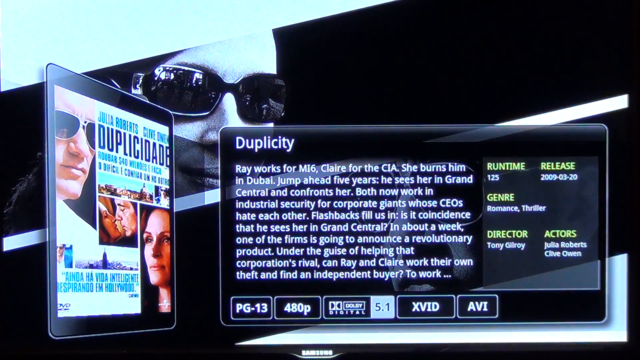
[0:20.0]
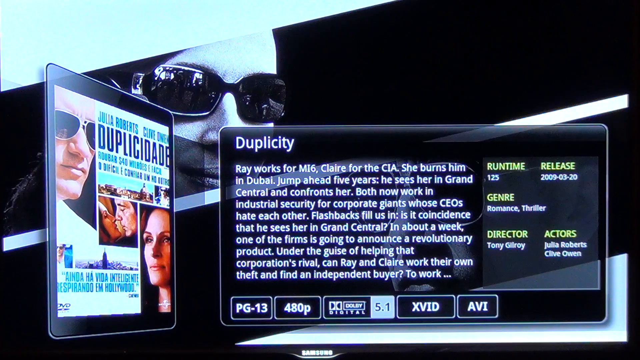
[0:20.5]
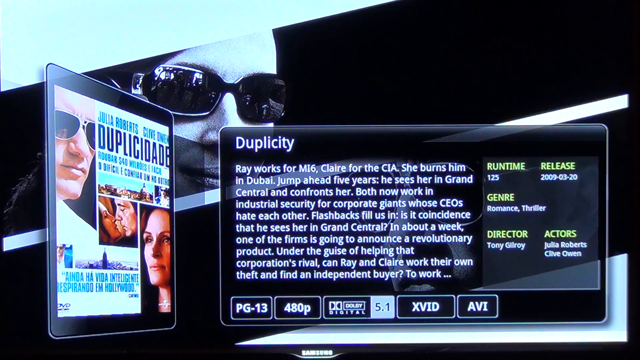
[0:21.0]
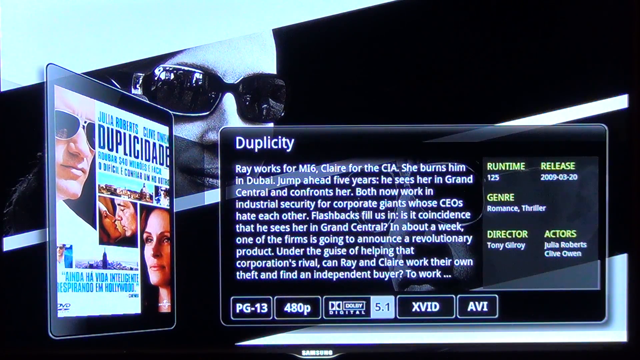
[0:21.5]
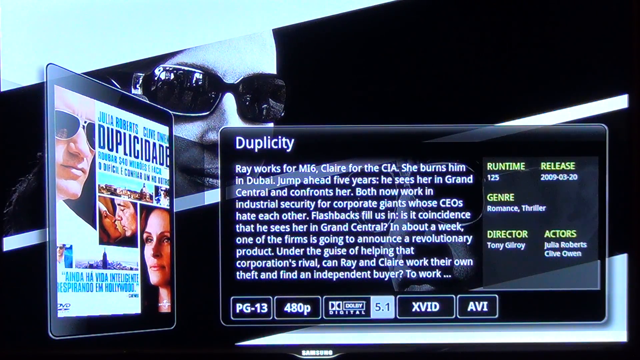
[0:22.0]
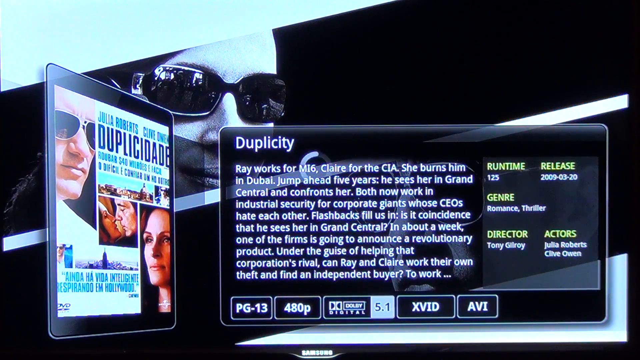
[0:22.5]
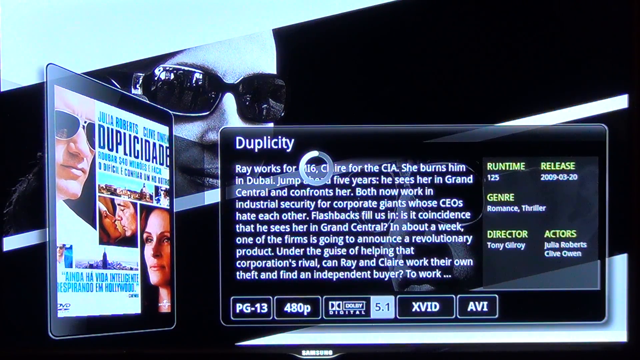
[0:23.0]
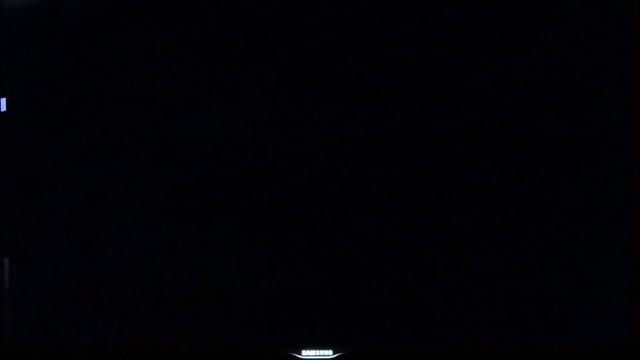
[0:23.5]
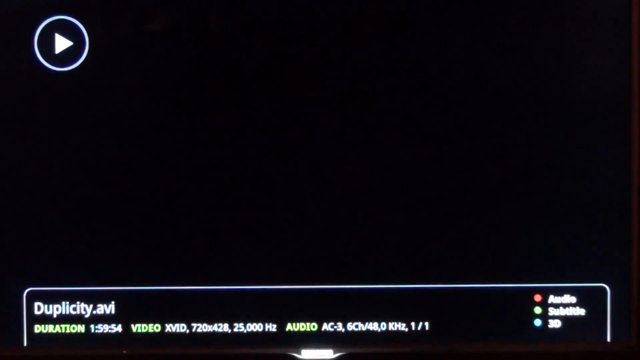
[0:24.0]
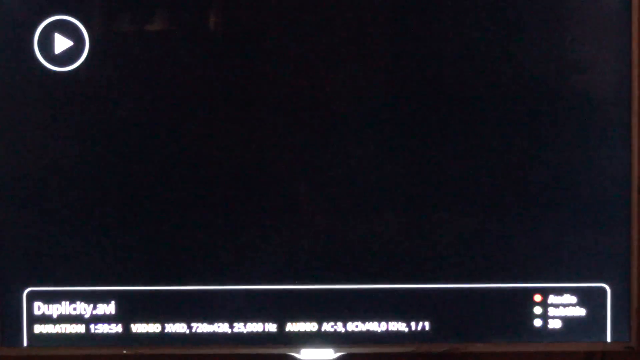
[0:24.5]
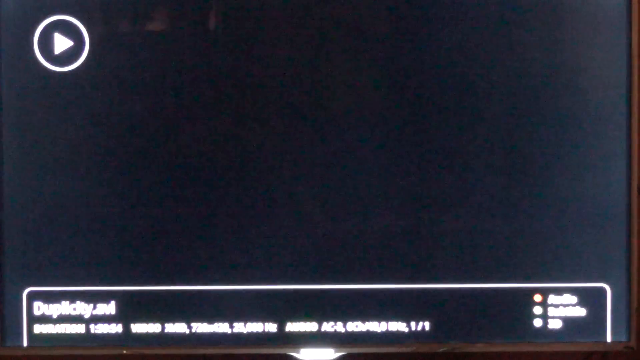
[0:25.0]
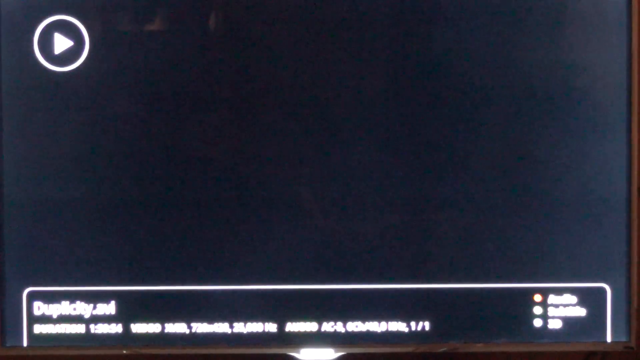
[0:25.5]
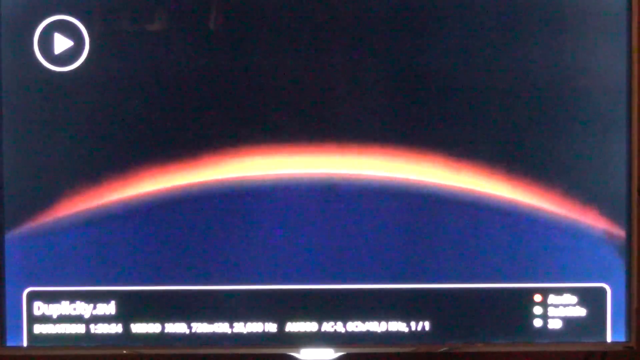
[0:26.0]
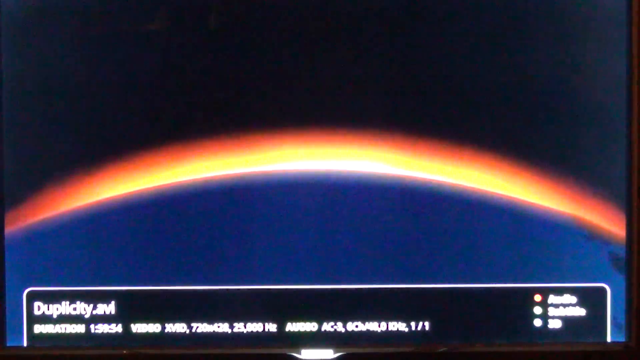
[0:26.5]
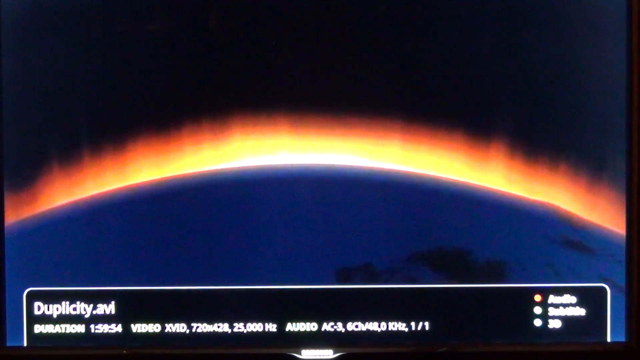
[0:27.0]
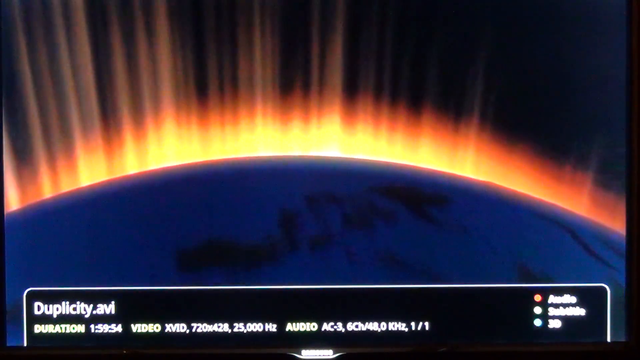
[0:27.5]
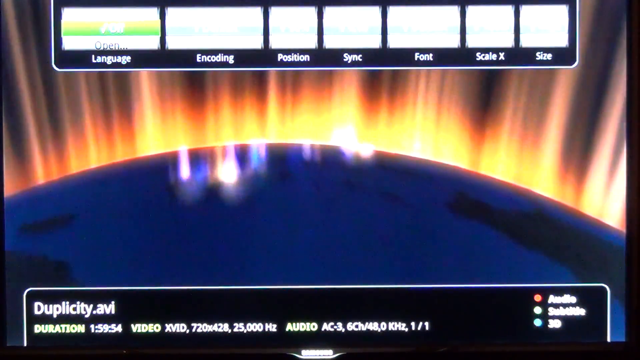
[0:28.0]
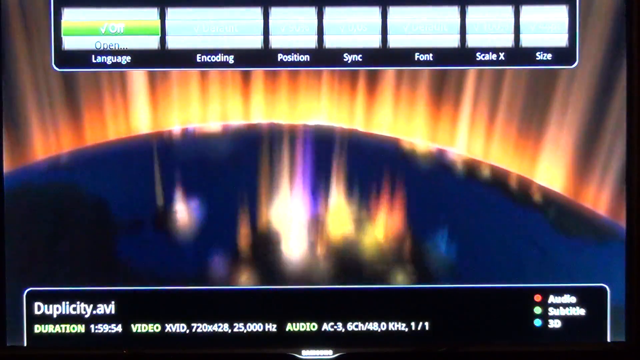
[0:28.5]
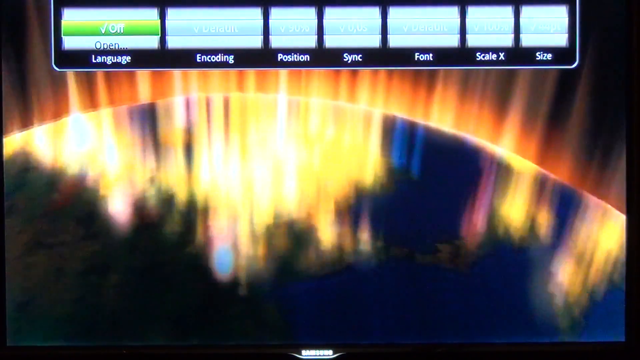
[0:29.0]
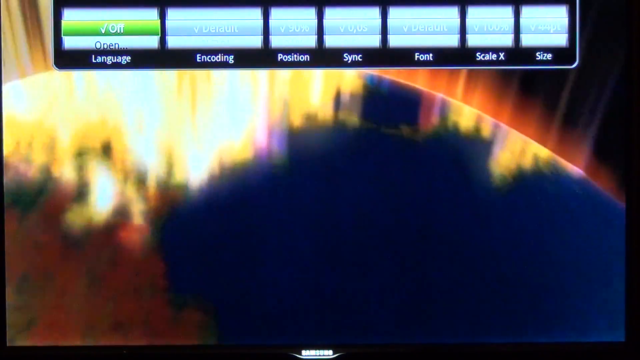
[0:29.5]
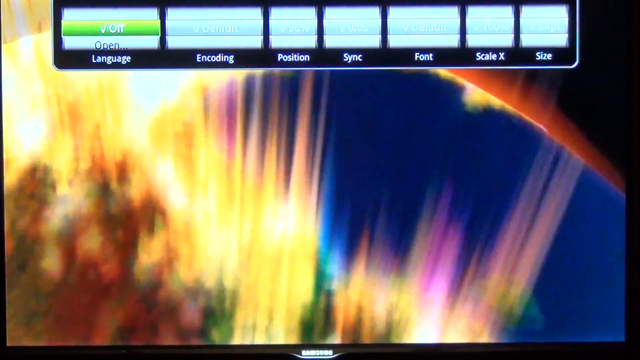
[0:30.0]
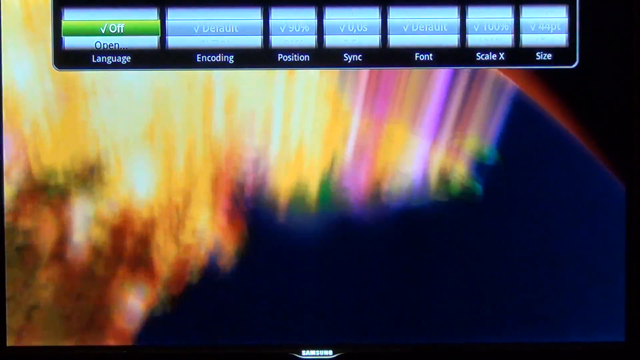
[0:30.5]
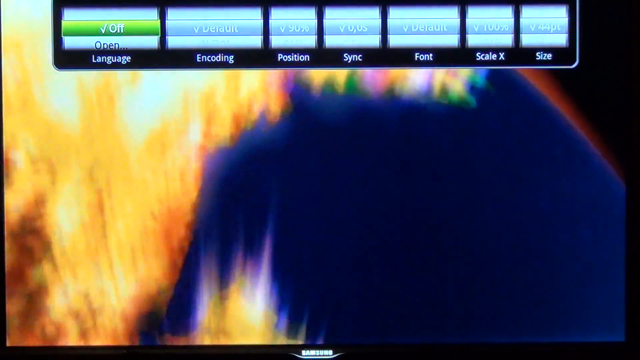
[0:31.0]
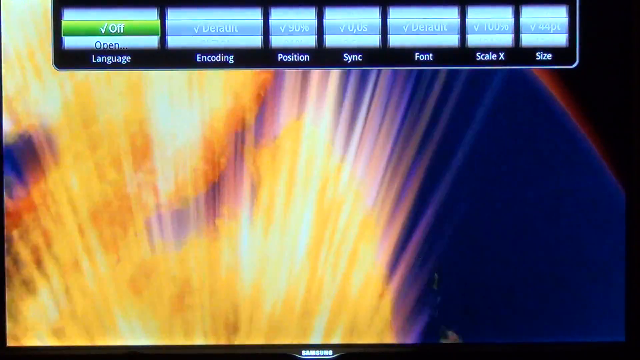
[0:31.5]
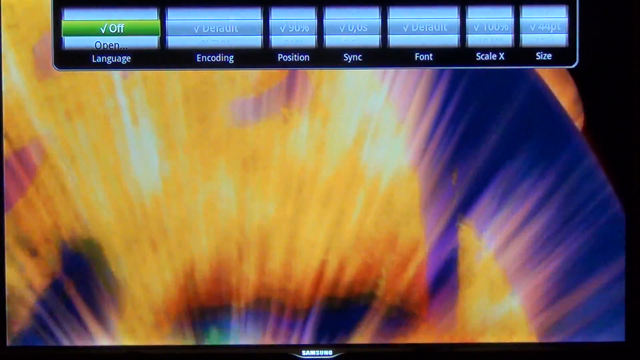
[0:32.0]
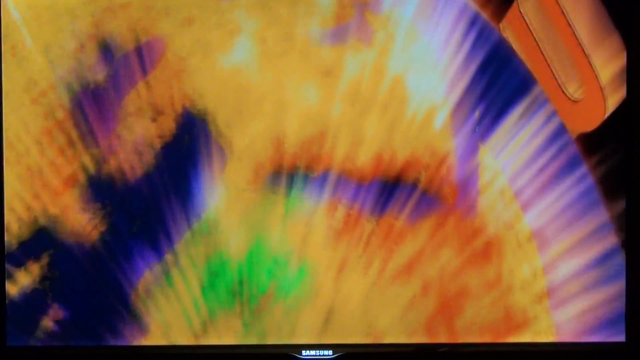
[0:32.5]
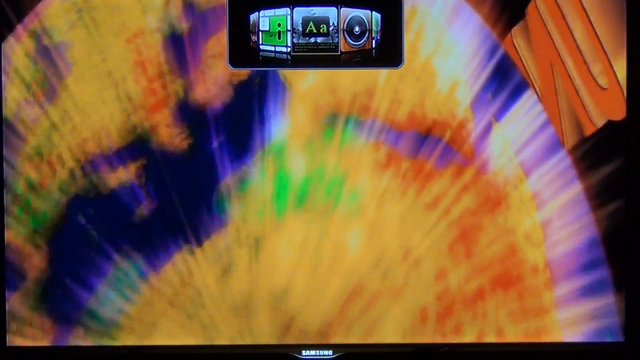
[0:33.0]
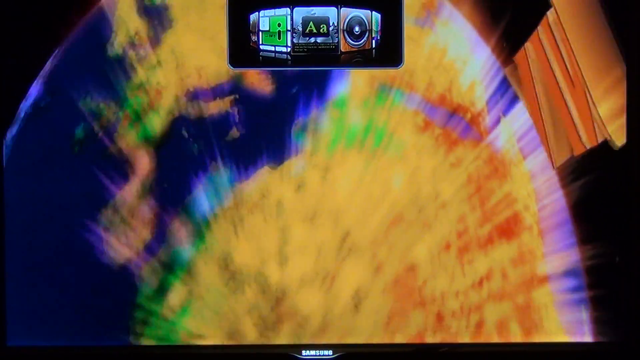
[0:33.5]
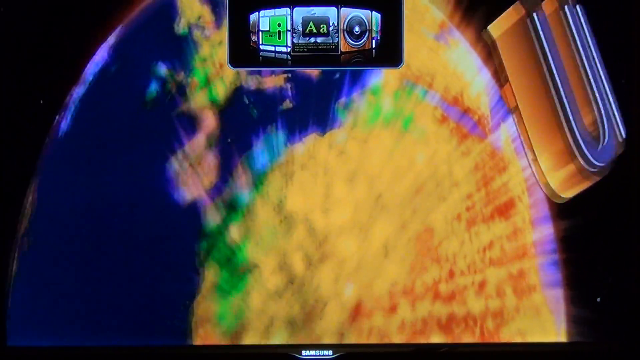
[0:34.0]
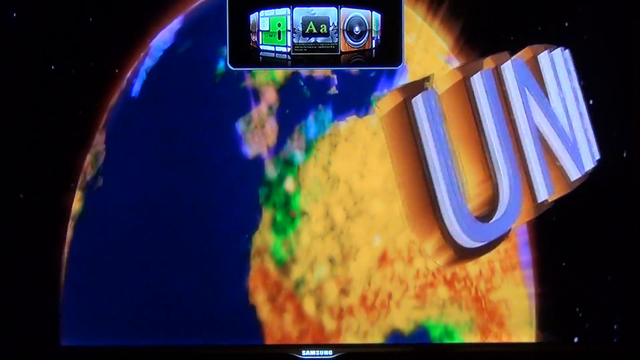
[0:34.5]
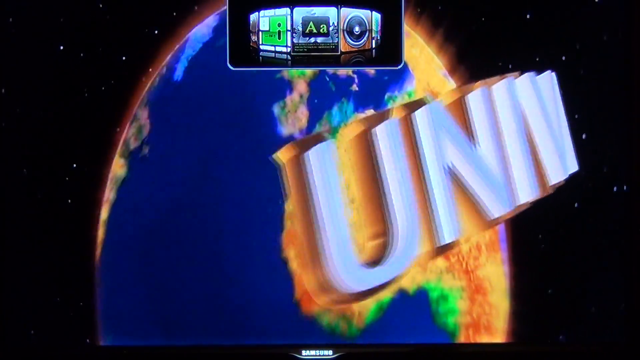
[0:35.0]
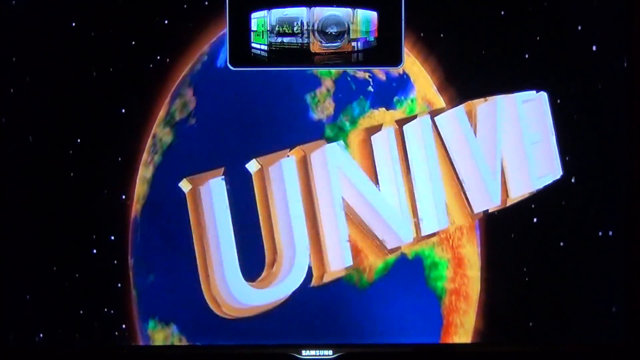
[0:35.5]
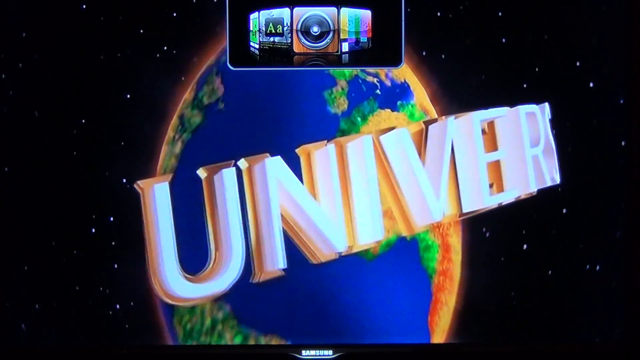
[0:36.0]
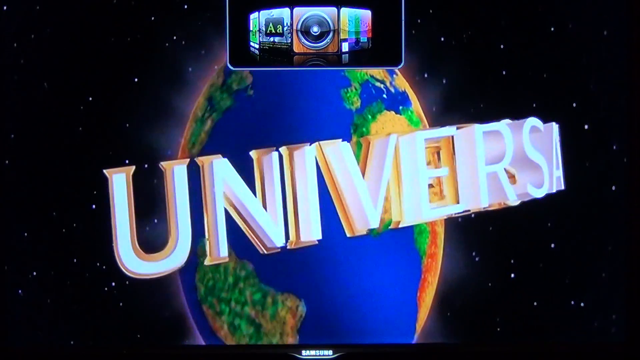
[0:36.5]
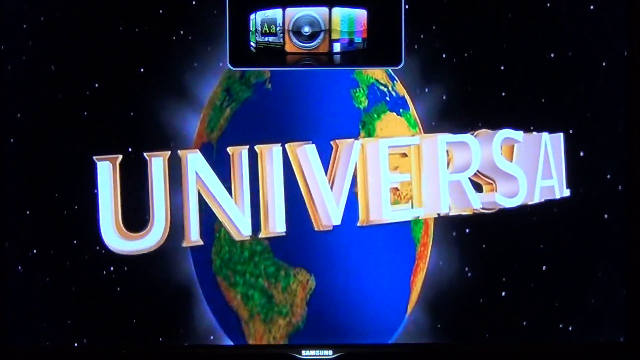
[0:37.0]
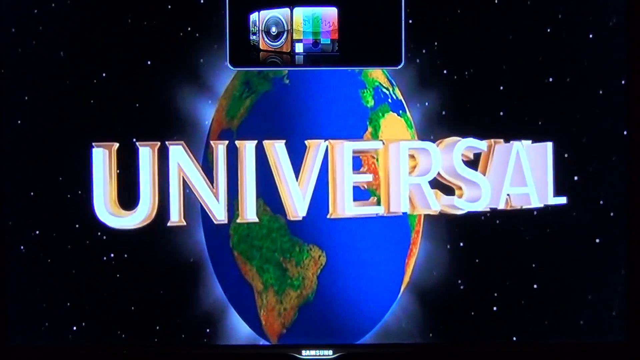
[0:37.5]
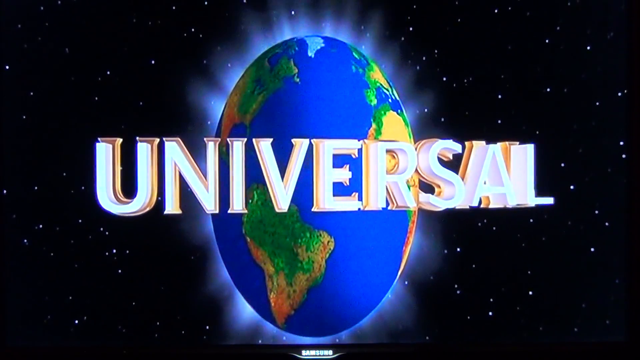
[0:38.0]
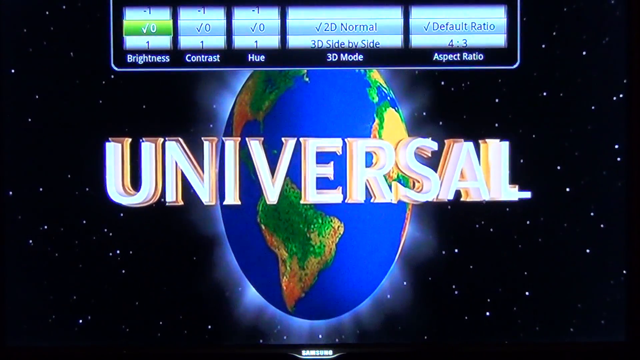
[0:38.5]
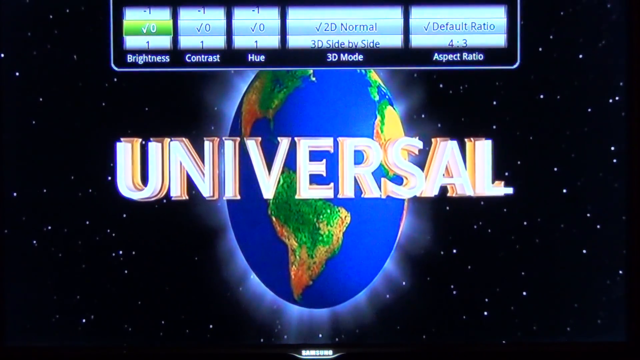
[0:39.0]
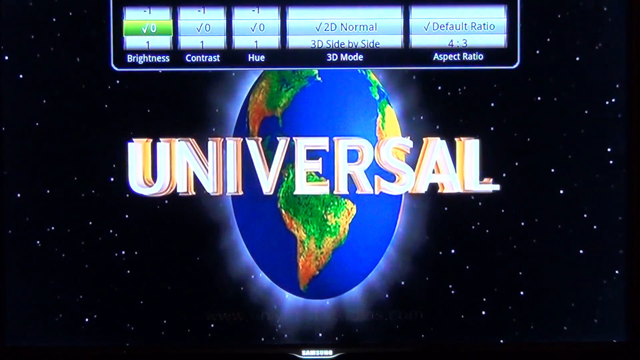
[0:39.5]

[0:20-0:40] The summary of the film comes up; it is an AVI file. Other details of the film besides the summary are also visible: its genre, run time, actors, release date, video quality and age guidelines. They set the audio, subtitles and colour settings, including brightness, contrast, hue, whether to use 3D mode, and the aspect ratio. When they press play, the Universal Studios logo appears, with the globe and light coming out of the land; the aspect ratio seems a little off.